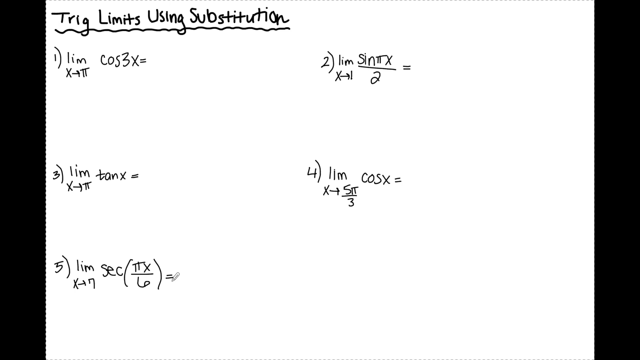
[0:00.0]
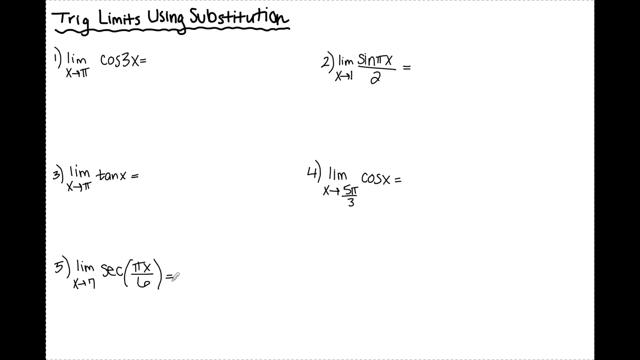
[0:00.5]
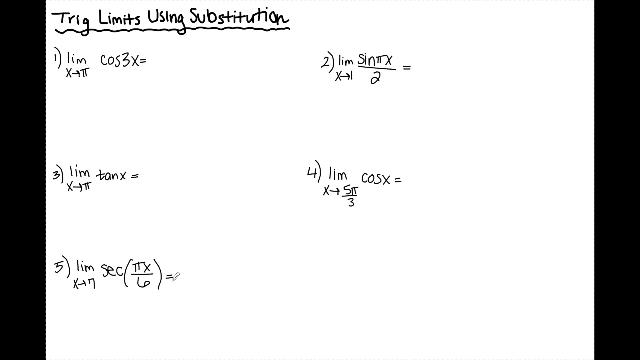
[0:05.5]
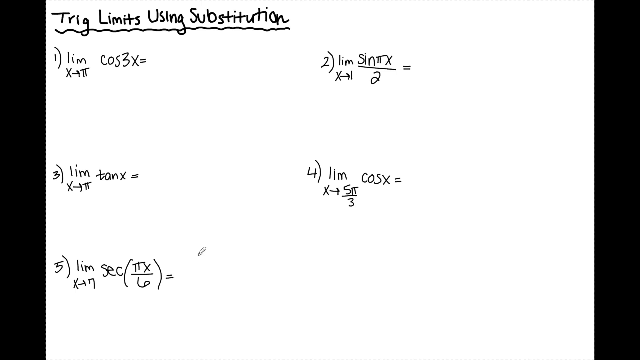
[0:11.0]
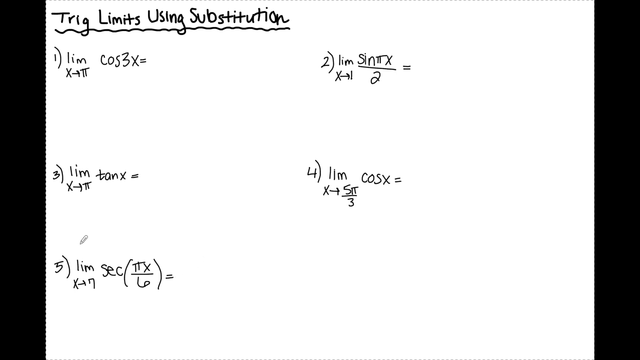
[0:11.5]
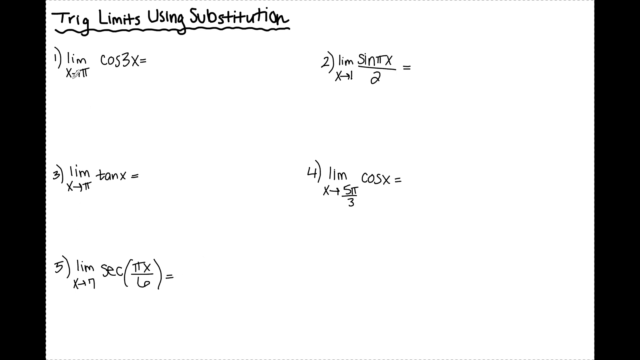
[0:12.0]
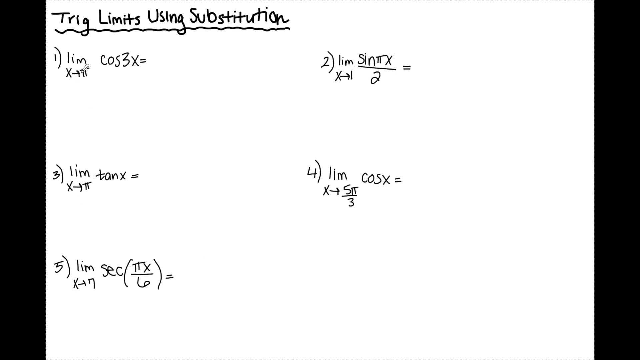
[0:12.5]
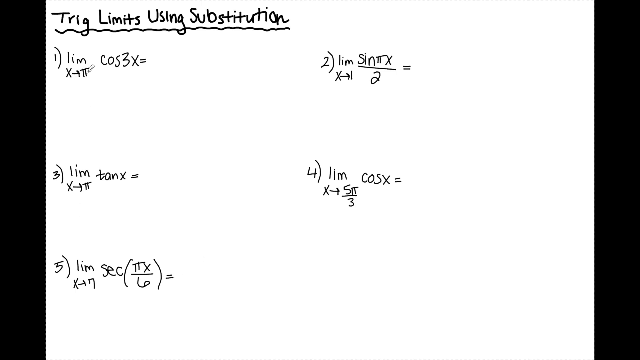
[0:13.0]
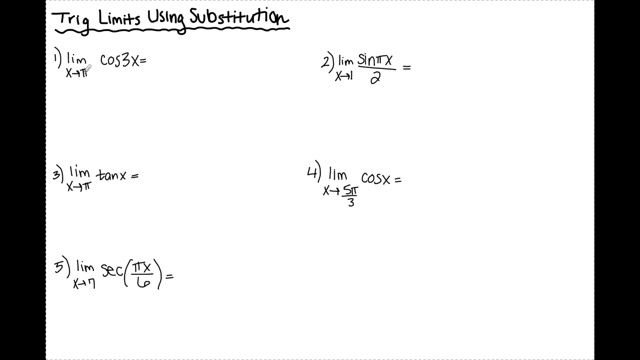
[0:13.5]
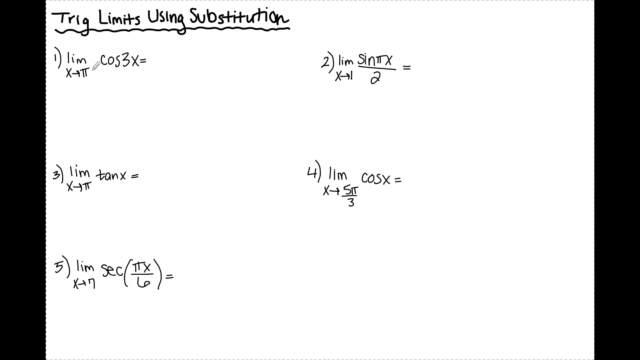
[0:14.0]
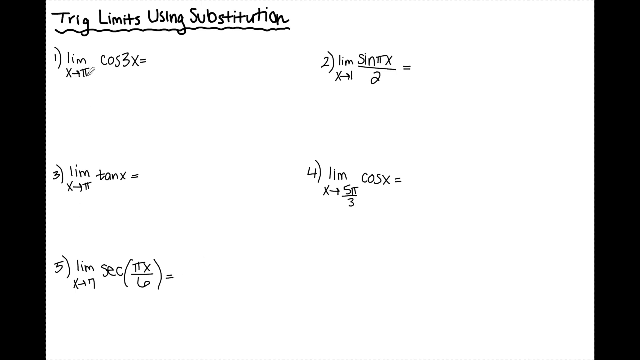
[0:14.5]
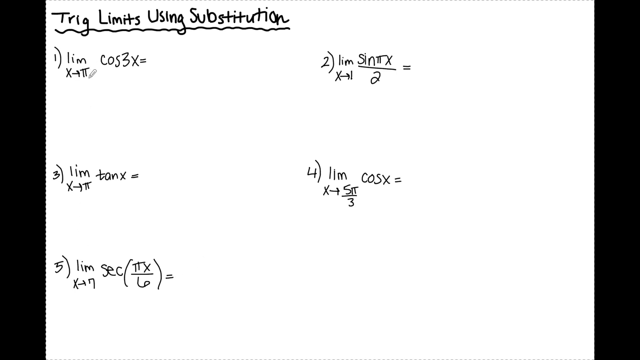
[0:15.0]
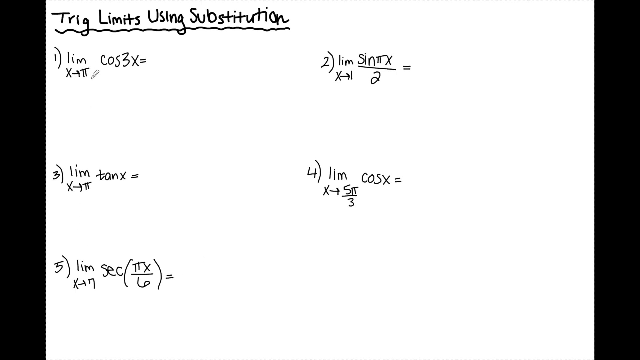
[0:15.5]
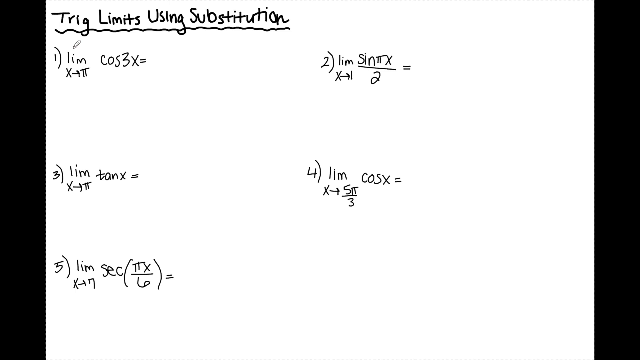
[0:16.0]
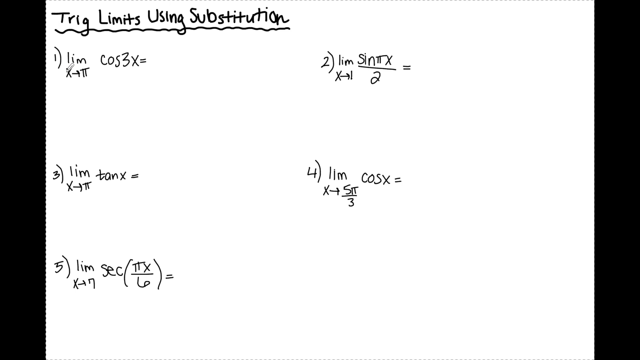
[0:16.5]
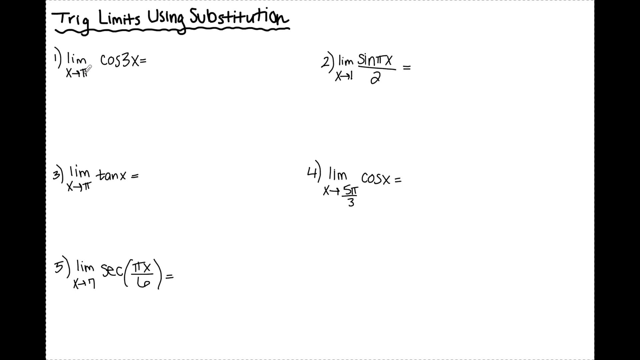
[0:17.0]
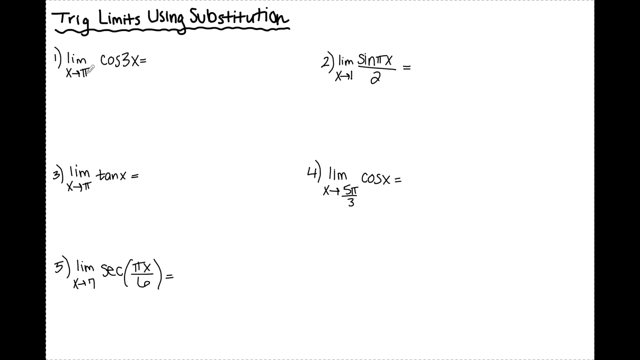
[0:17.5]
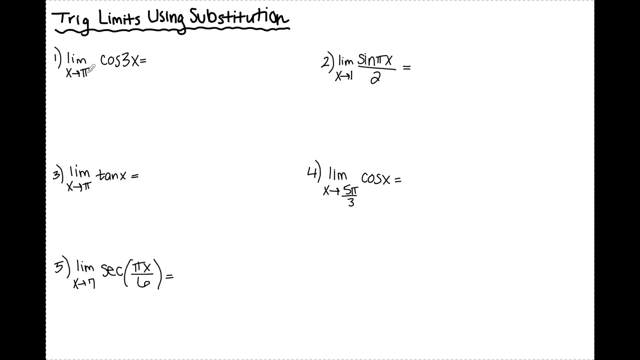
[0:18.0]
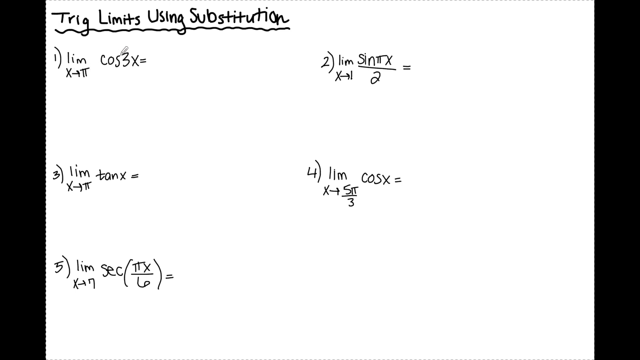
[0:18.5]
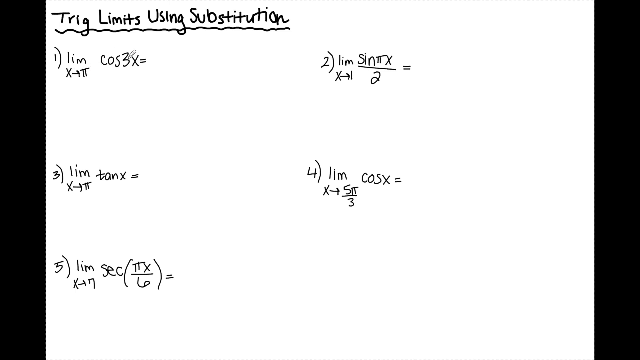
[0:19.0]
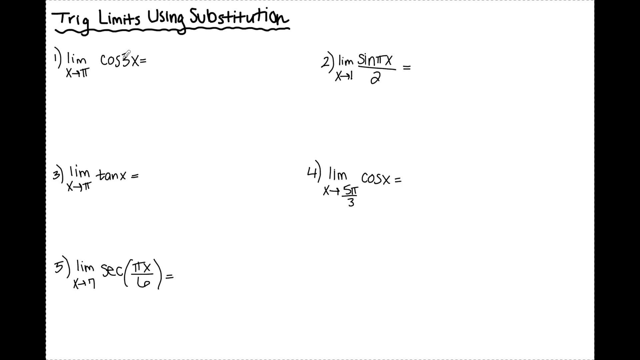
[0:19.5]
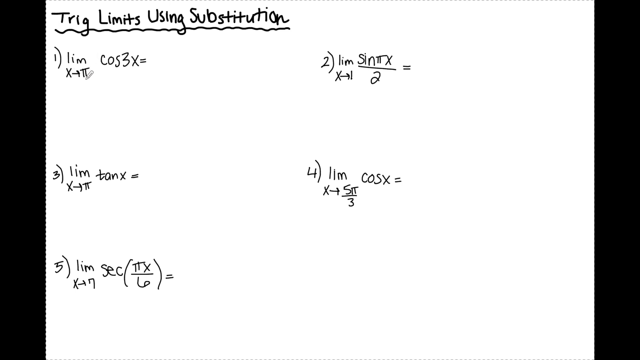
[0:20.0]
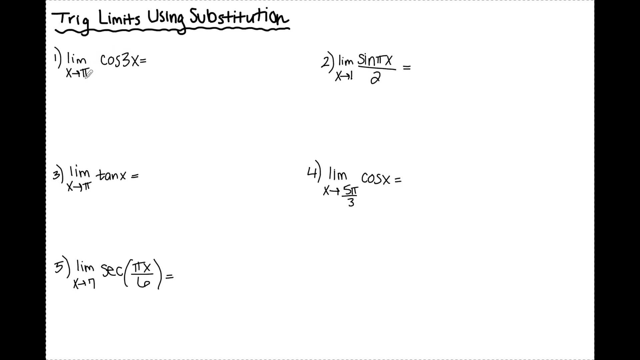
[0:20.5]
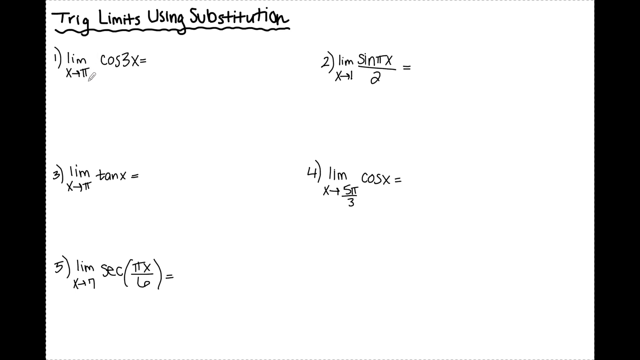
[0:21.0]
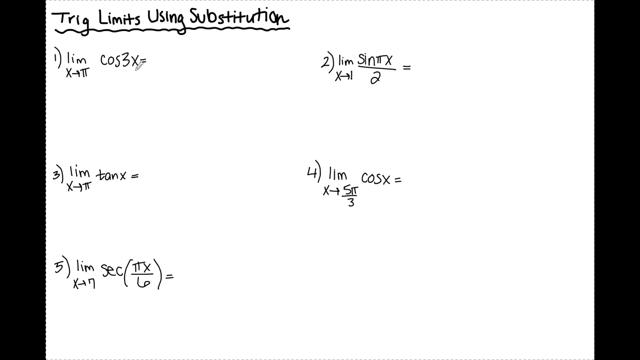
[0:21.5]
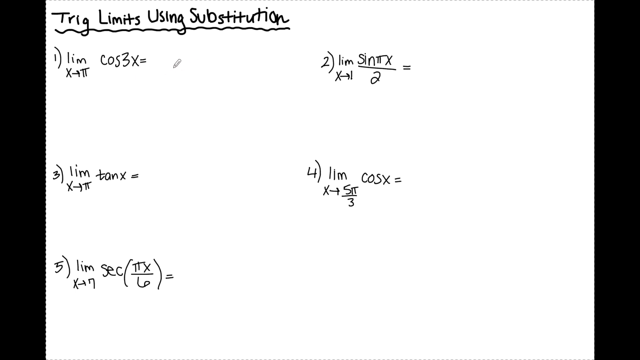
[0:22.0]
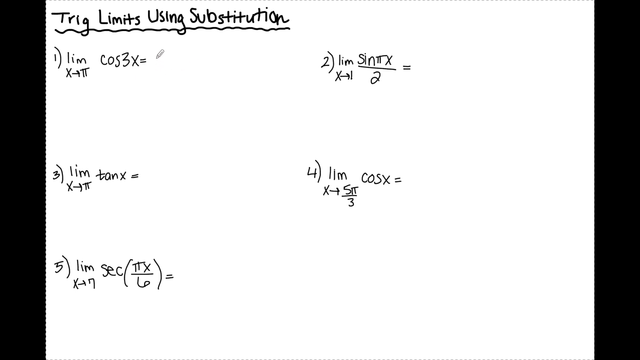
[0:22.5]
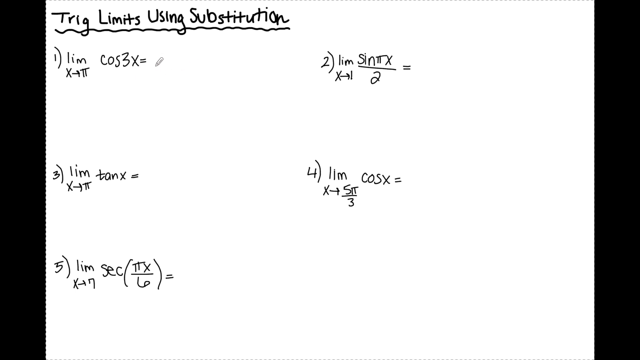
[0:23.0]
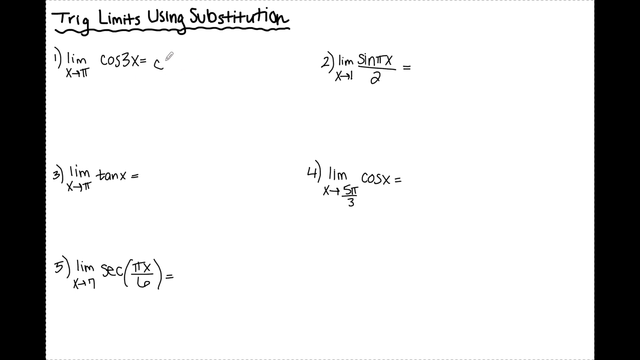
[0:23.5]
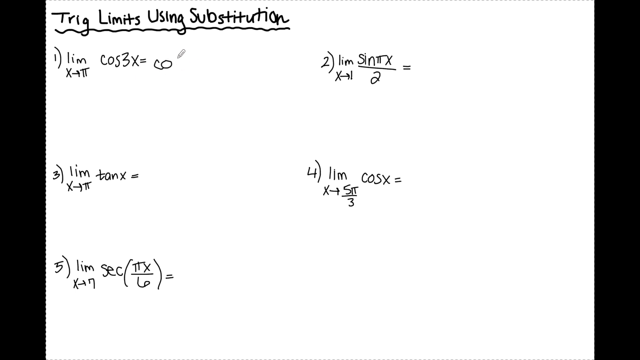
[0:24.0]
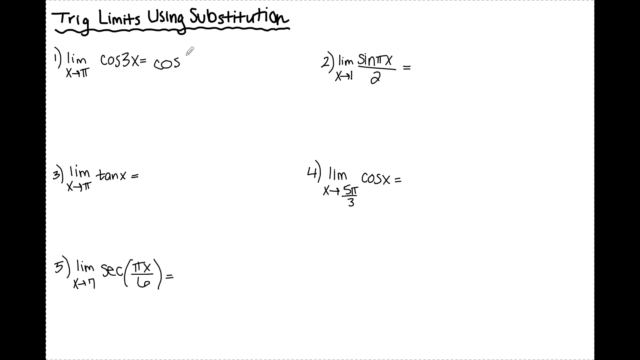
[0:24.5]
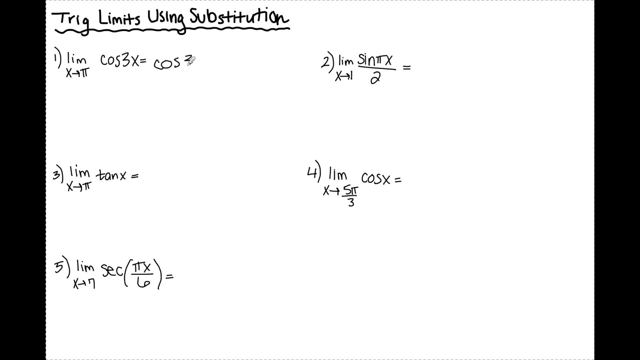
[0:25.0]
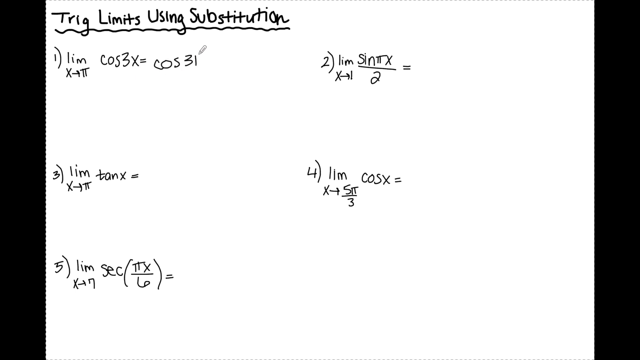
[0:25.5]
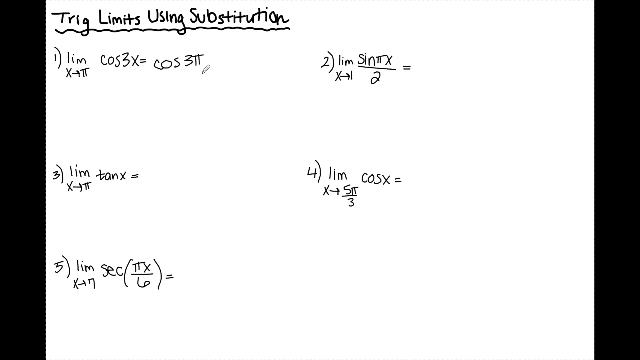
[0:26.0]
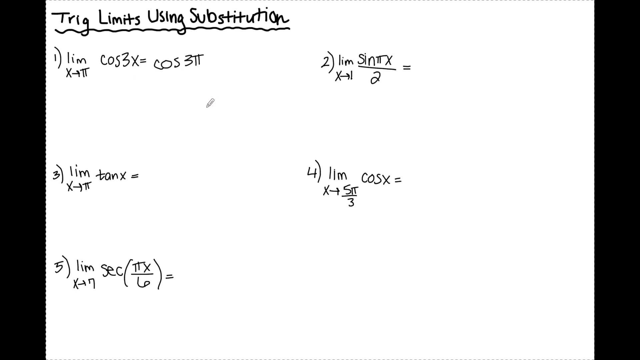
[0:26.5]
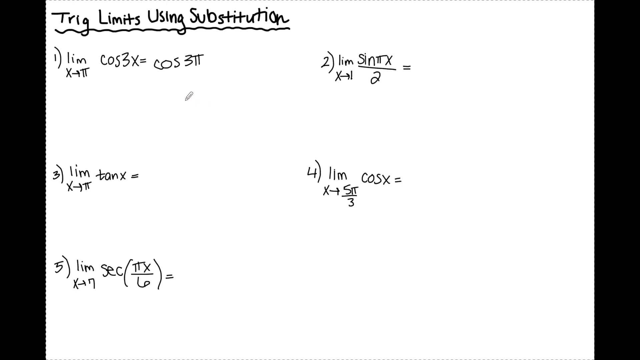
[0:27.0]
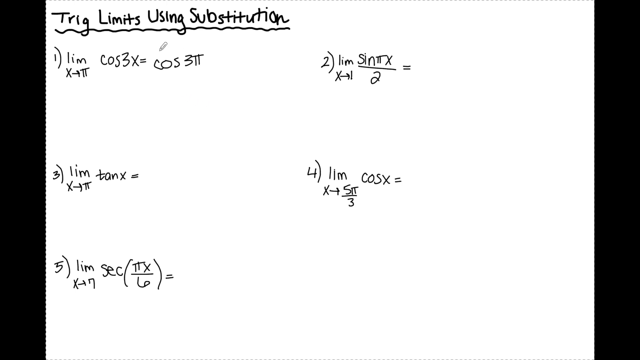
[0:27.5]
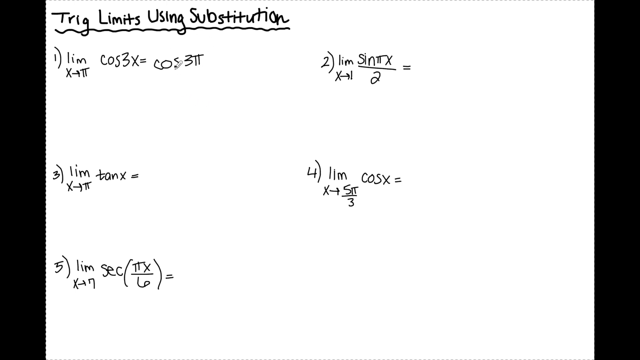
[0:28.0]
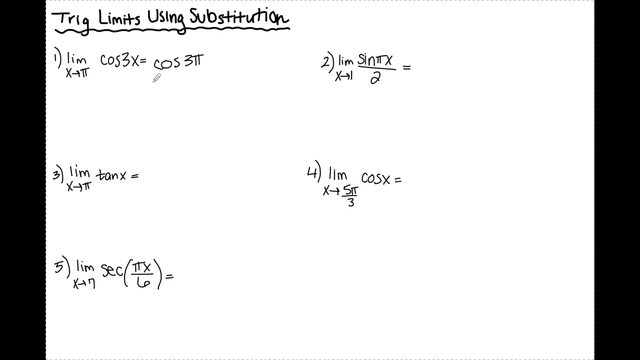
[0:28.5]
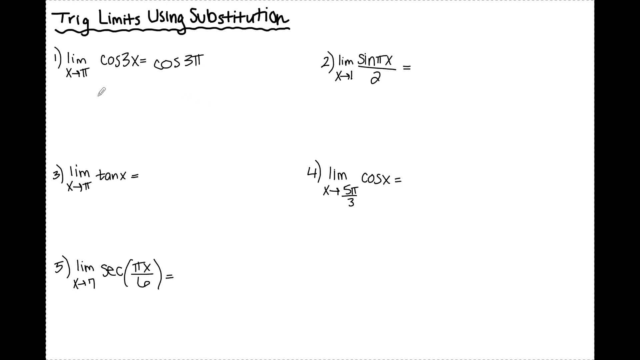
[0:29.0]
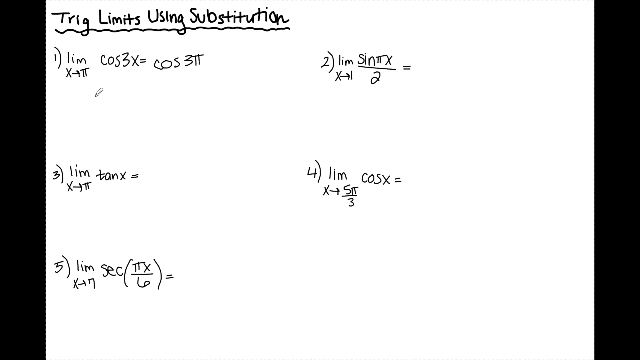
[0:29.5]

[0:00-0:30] A white blank background holds various equations in black text. At the top is a title that reads "trig limits using substitution", underlined with a black line. Below it are five numbered items, each number followed by a parenthesis, and after each number is an equation involving a type of radian such as cosine, tan, or sin. A pen-shaped cursor moves across the screen from the bottom toward the top. It arrives at item 1 and circles the equation, going from the variable to the end of the equation with the radians. After the equals sign it writes the solution, cosine three pi. It then circles the solution and begins to draw a line.